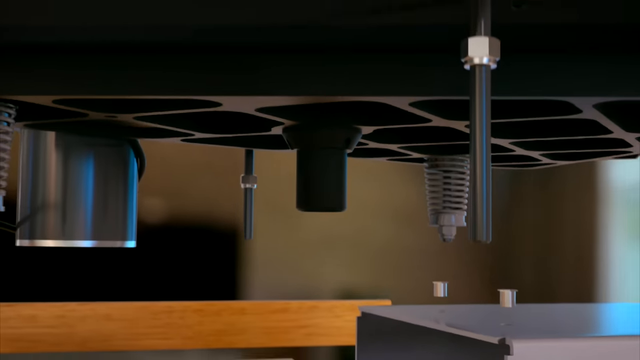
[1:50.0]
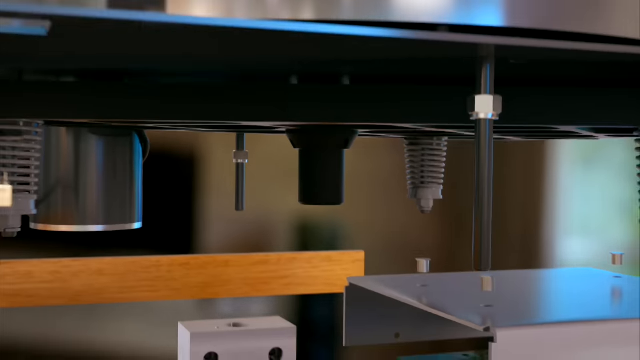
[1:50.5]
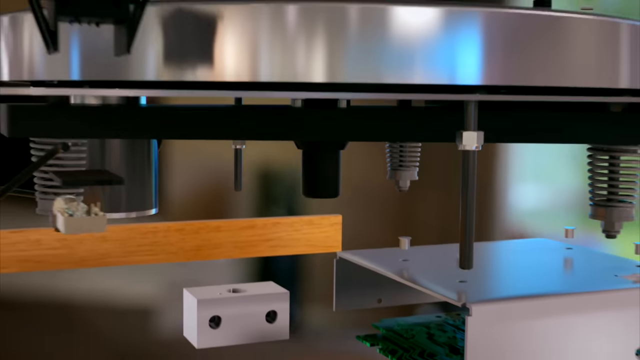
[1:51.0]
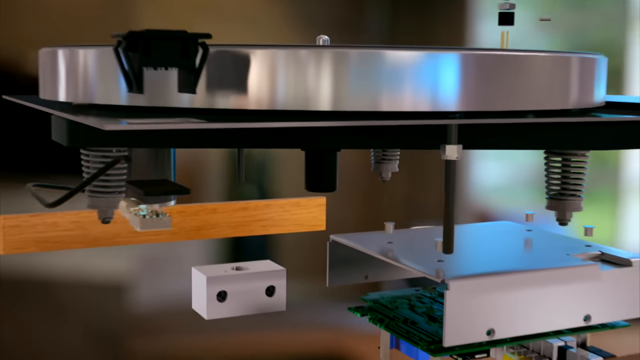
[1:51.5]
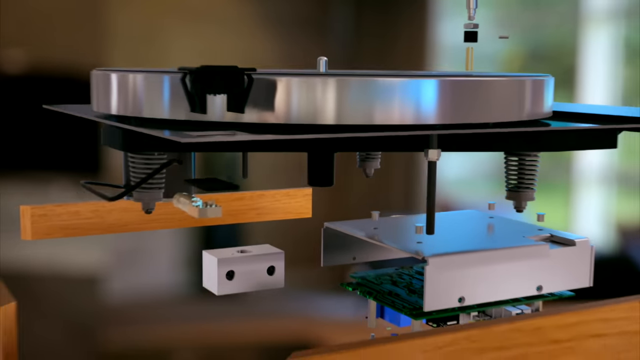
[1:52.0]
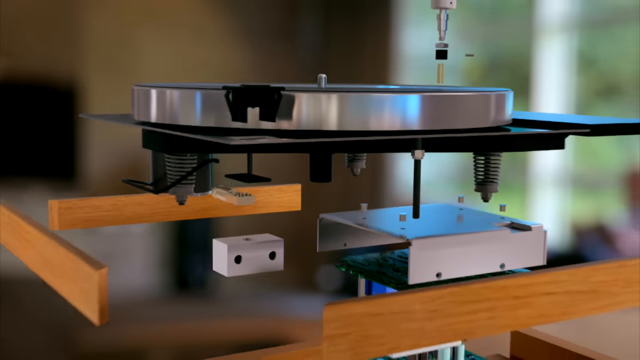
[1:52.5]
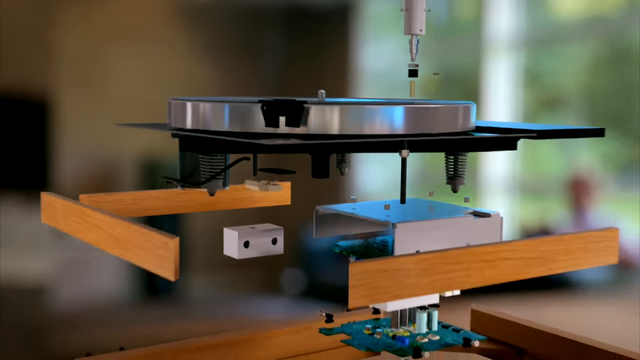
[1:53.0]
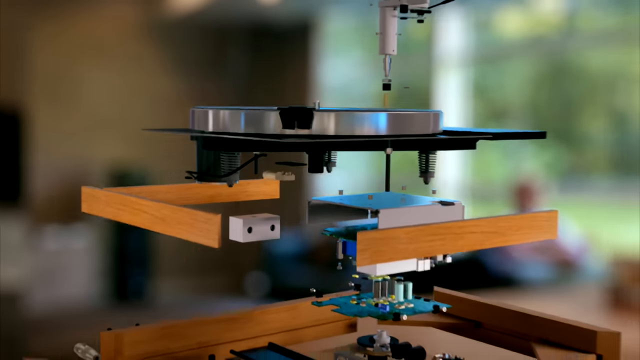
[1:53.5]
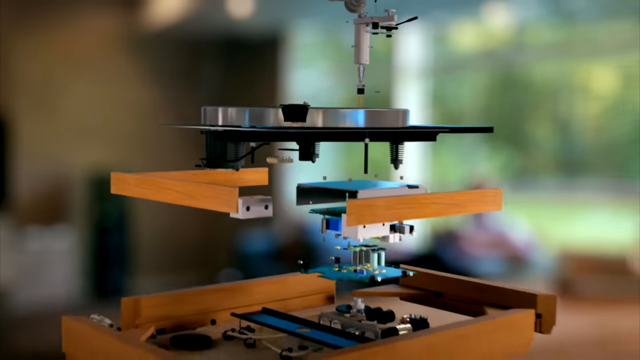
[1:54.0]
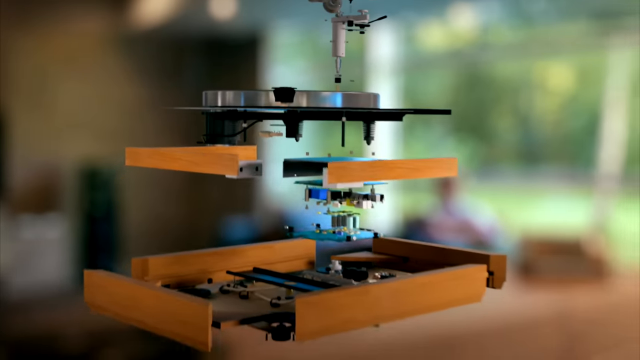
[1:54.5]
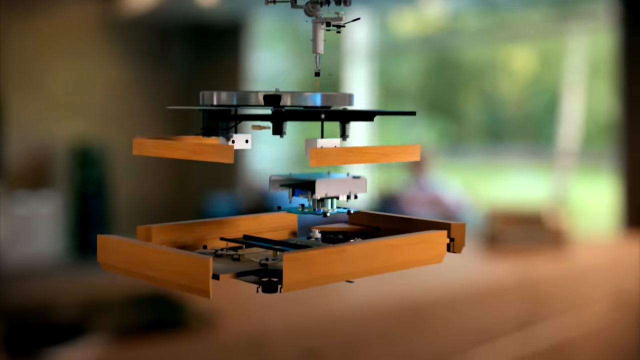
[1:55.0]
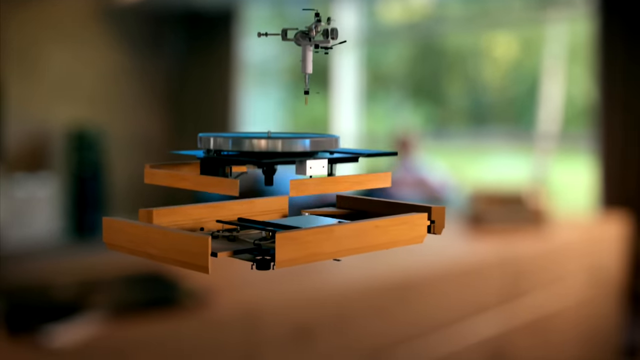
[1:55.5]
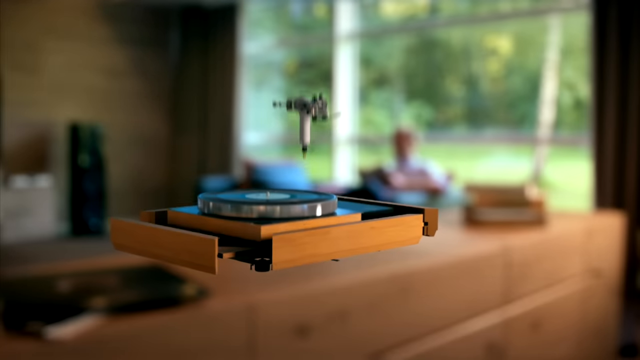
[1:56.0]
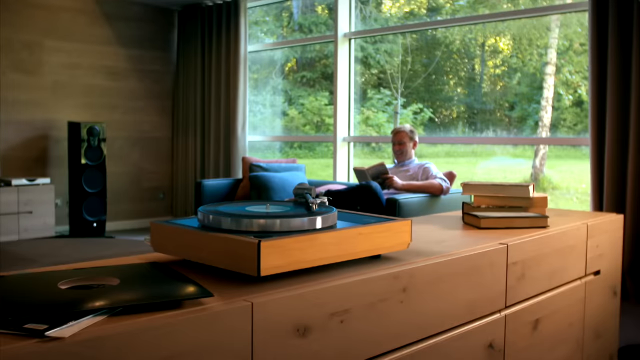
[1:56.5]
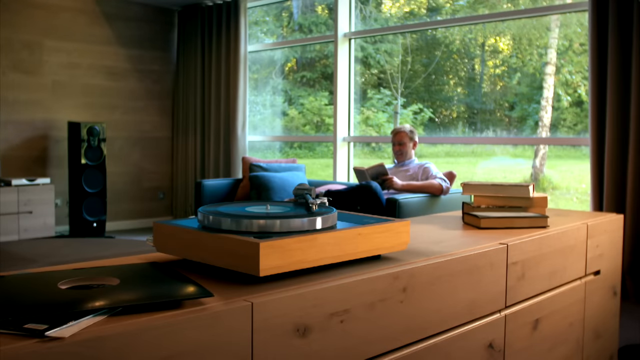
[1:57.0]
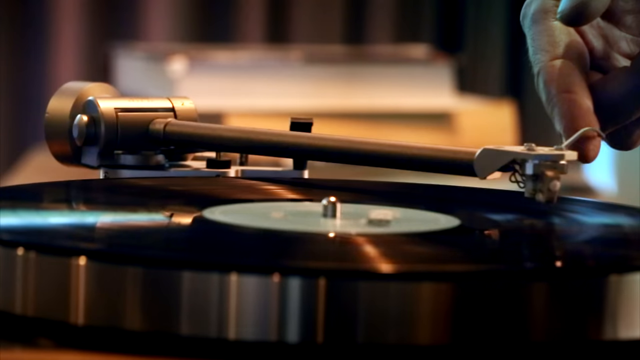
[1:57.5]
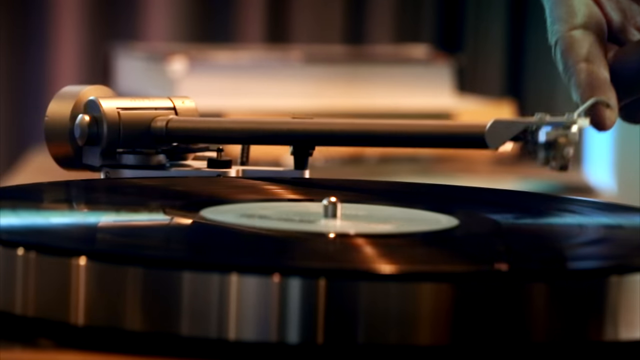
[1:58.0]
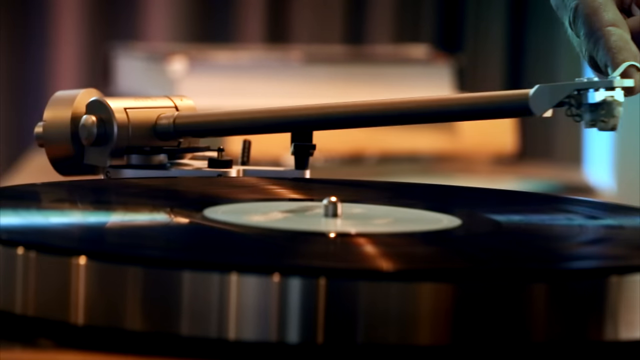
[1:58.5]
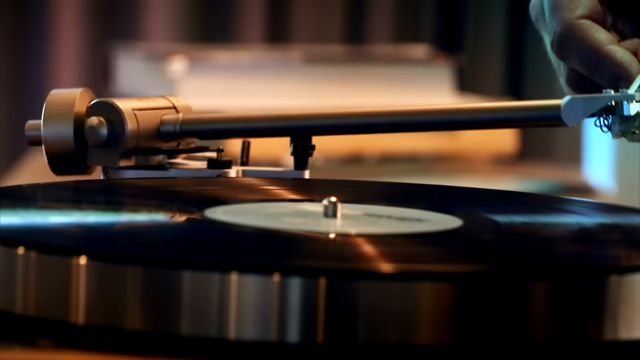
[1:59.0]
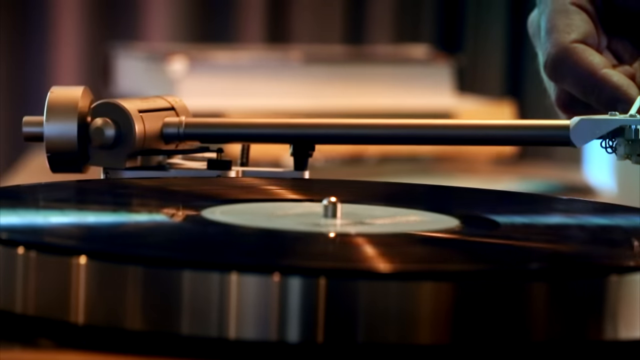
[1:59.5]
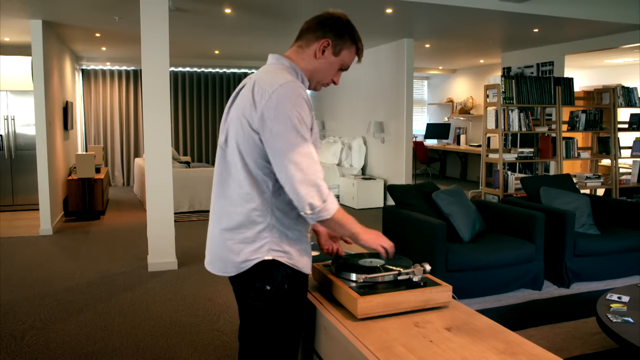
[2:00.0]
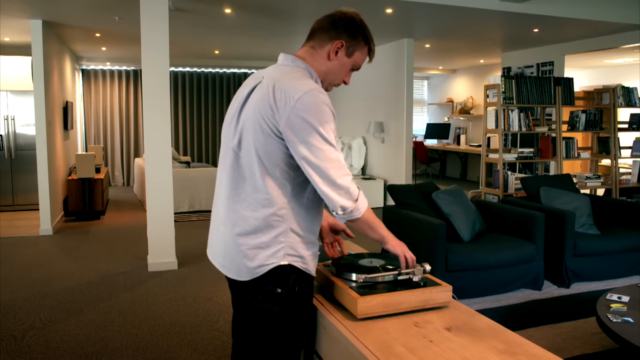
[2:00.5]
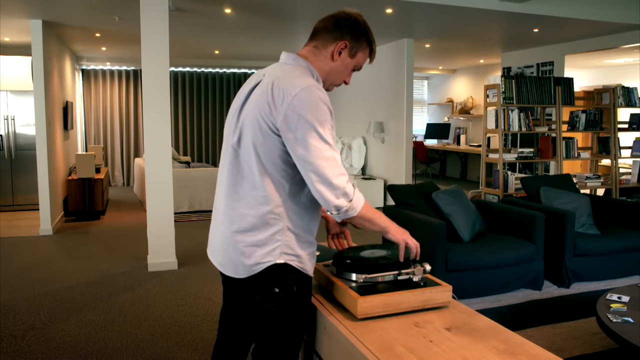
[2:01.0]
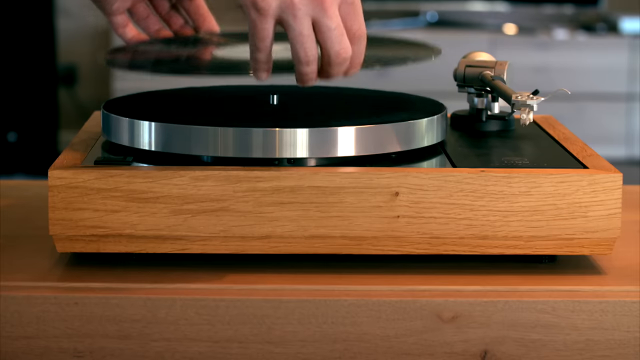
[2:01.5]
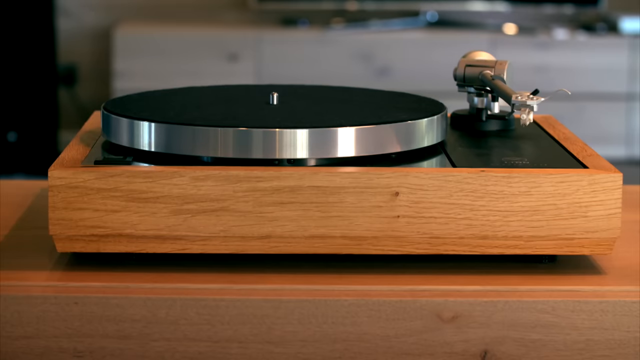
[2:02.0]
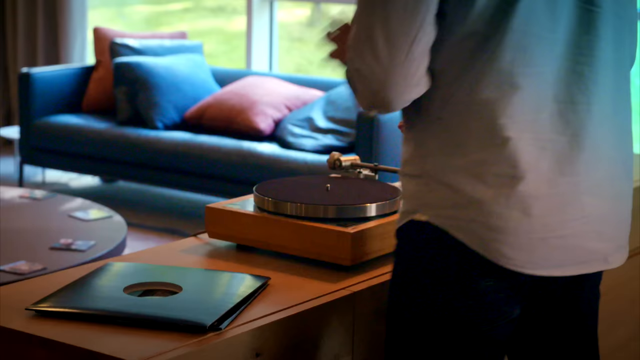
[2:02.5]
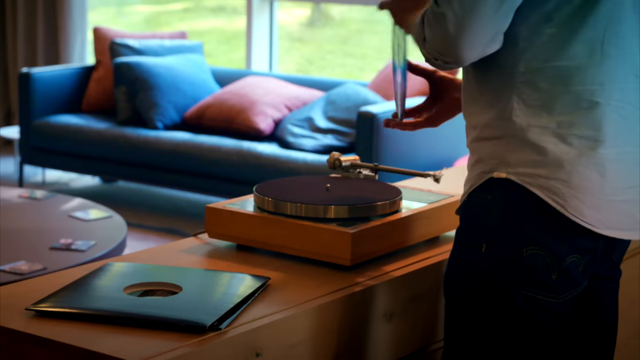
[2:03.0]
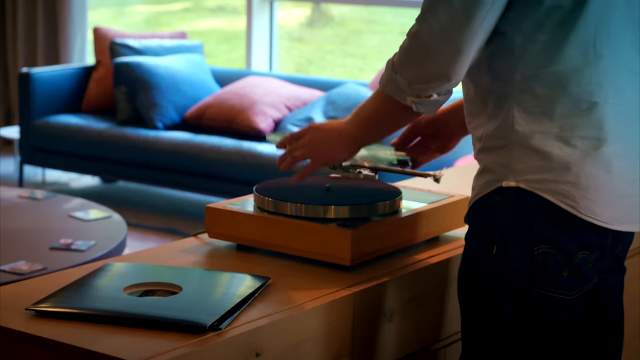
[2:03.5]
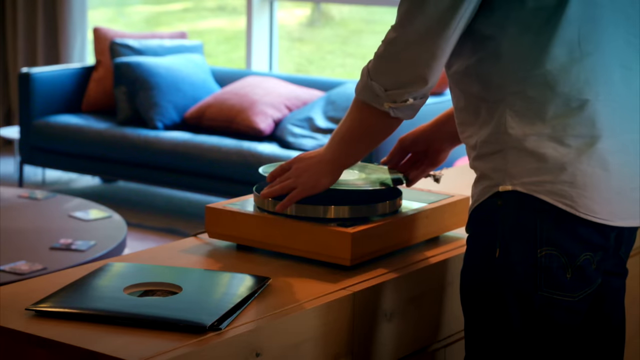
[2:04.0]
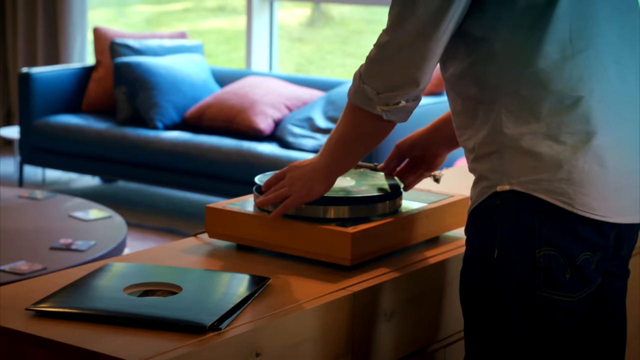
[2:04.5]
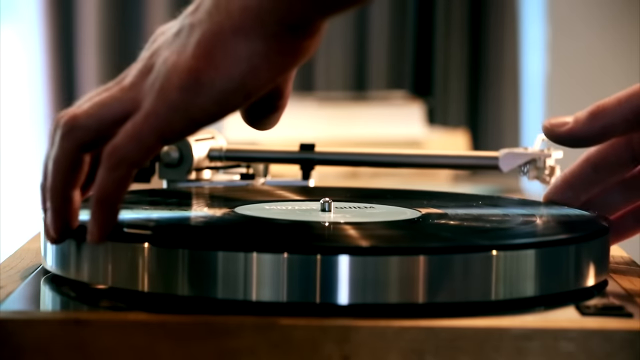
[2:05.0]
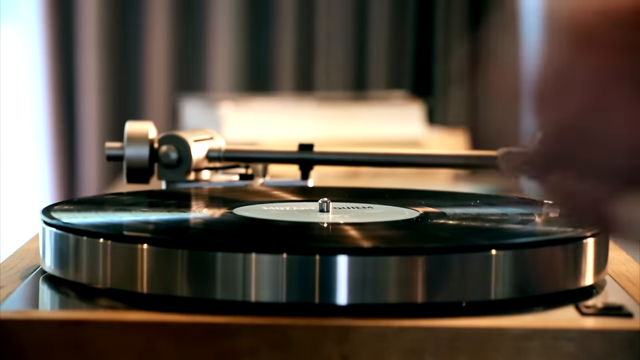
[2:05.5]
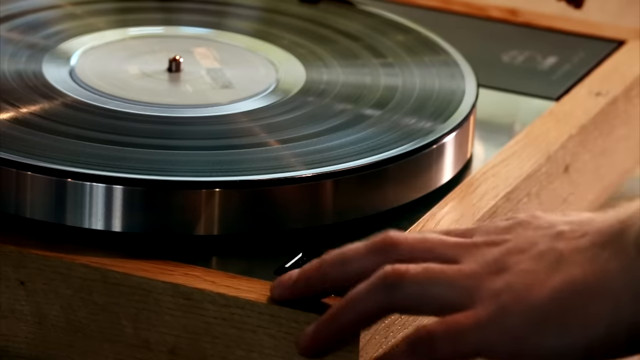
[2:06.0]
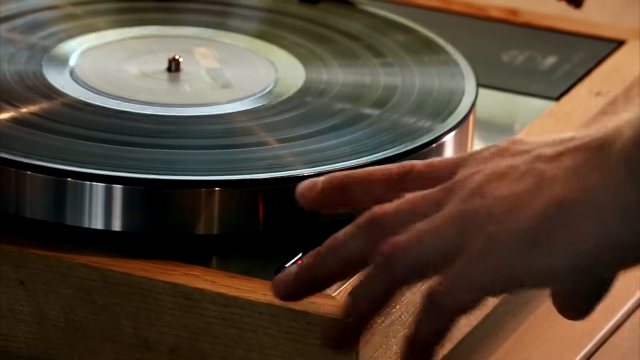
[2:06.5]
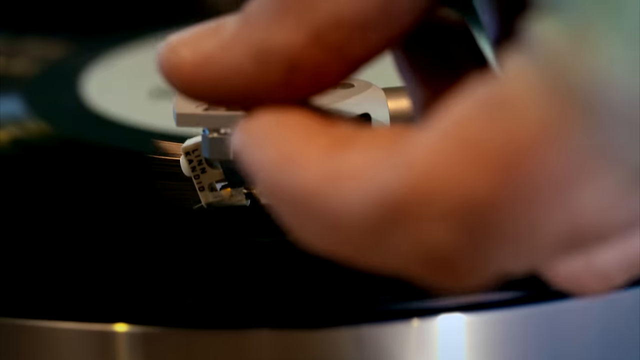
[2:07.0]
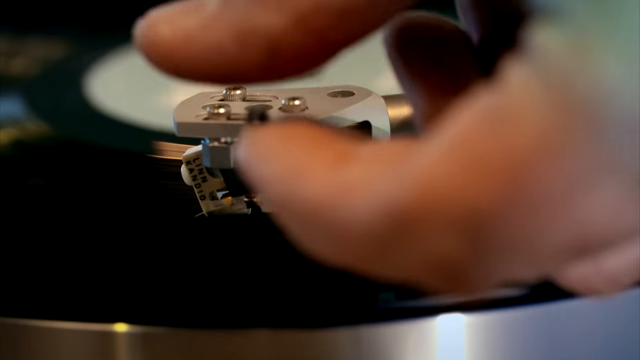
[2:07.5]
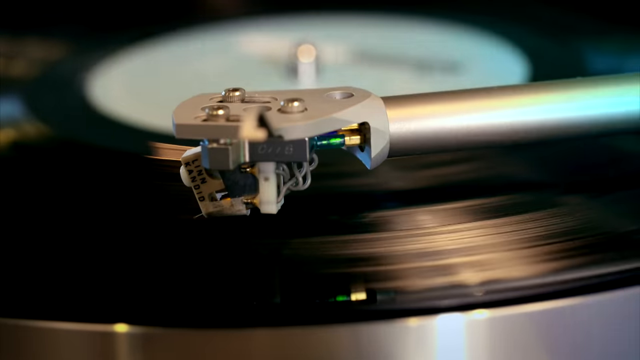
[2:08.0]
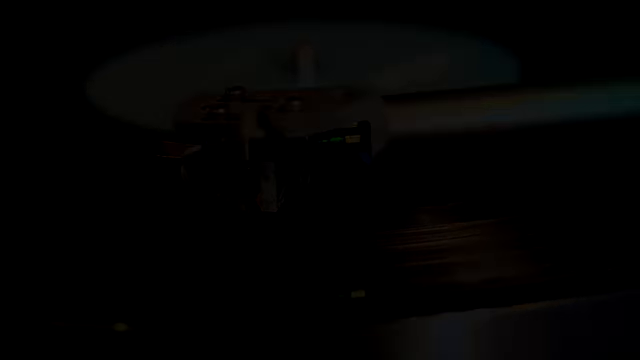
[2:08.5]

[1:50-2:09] The exploded view of the record player continues, still showing the components and parts that make it up, such as bolts, screws, circuit boards and other pieces. In a zooming-out view, the record player is put back together into its normal form, still on the countertop in the warm, modern, minimalist living room, with the man still sitting on the couch reading the book next to the window, where it is bright outside. The scene then transitions to the man at the record player once again; he takes off the handle, removes the original record, puts down a new record on the record player and sets the handle back on it.